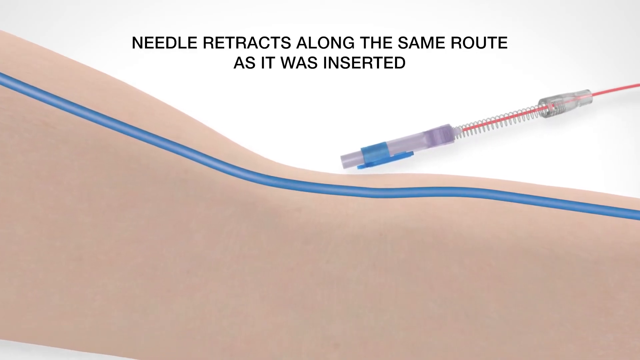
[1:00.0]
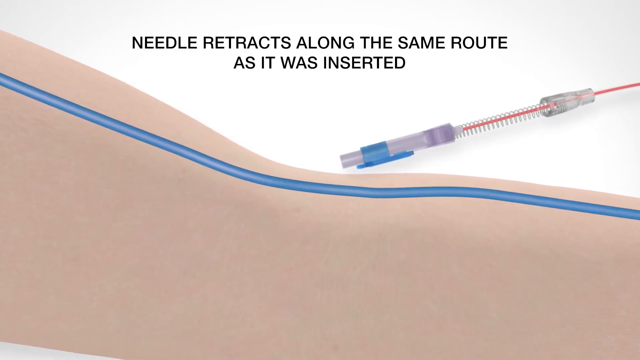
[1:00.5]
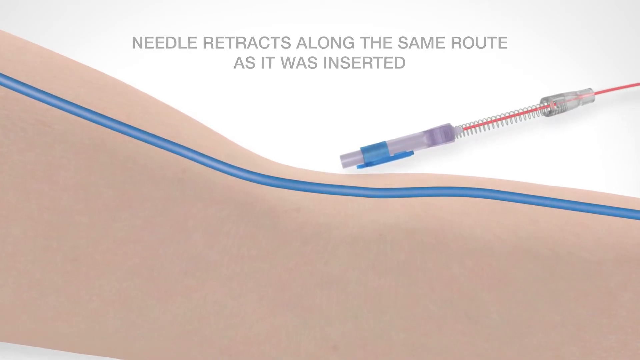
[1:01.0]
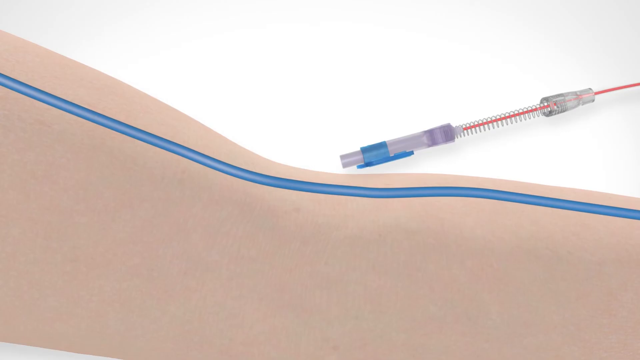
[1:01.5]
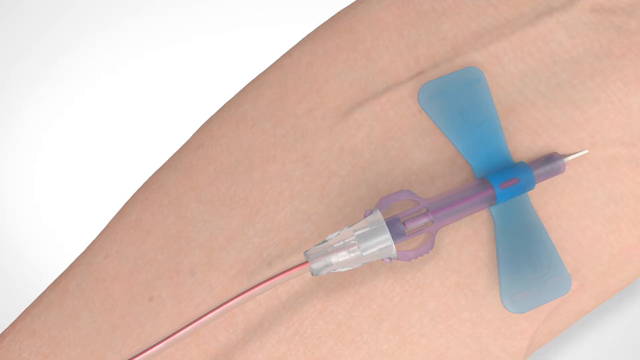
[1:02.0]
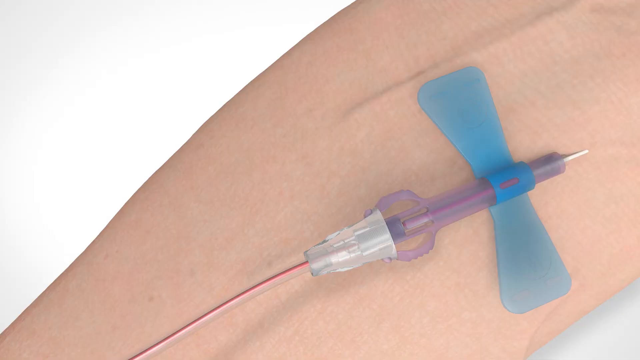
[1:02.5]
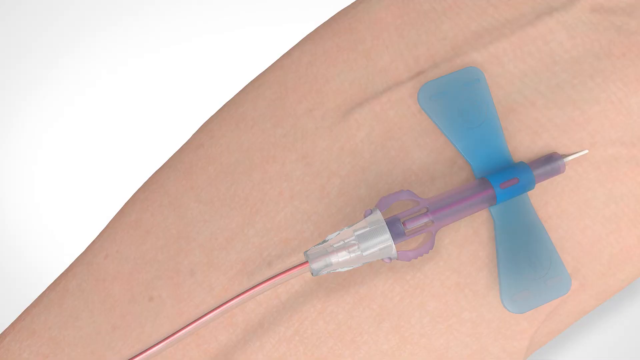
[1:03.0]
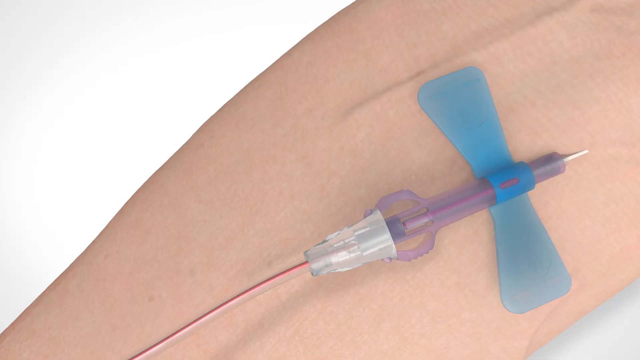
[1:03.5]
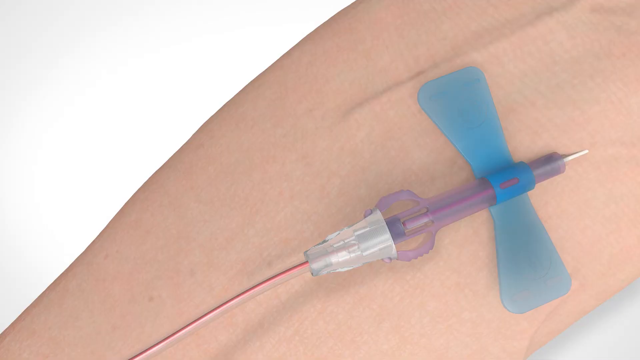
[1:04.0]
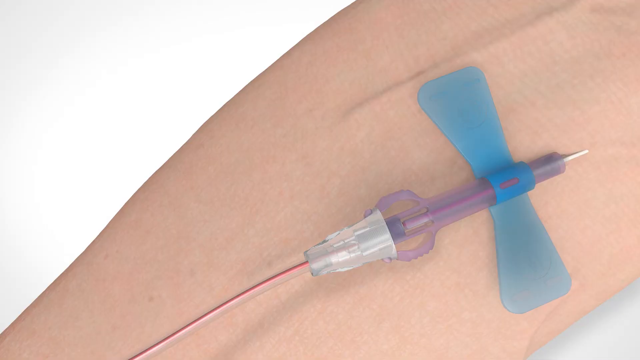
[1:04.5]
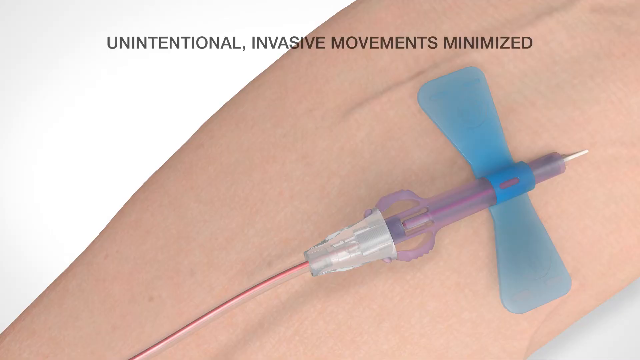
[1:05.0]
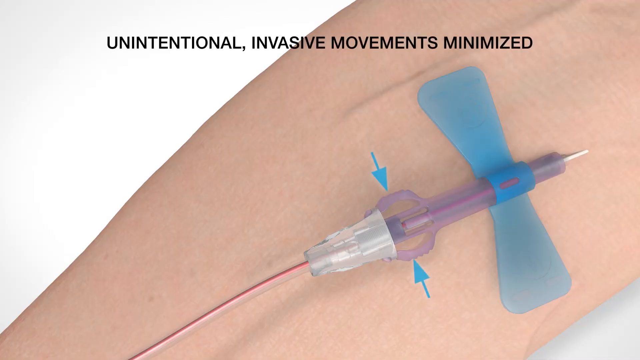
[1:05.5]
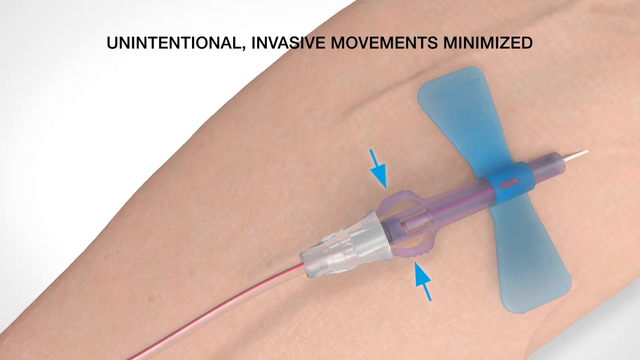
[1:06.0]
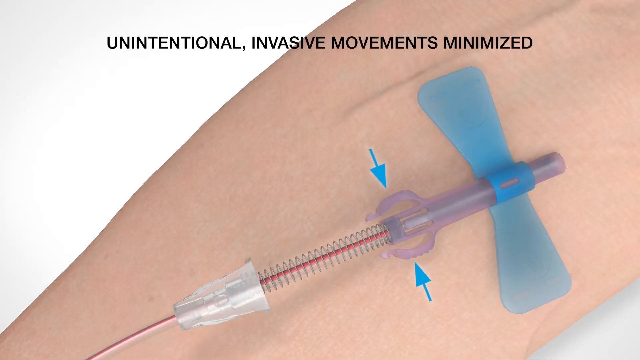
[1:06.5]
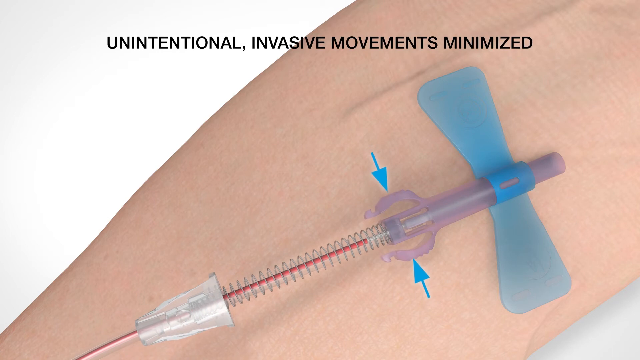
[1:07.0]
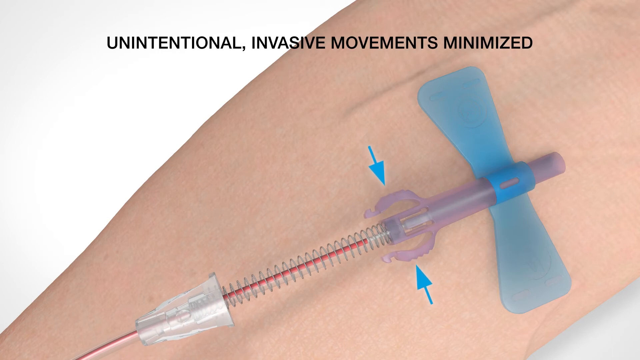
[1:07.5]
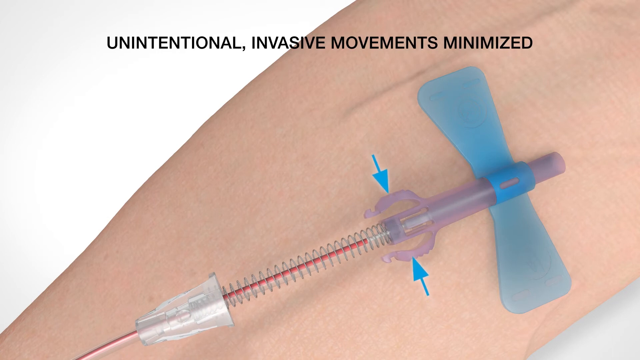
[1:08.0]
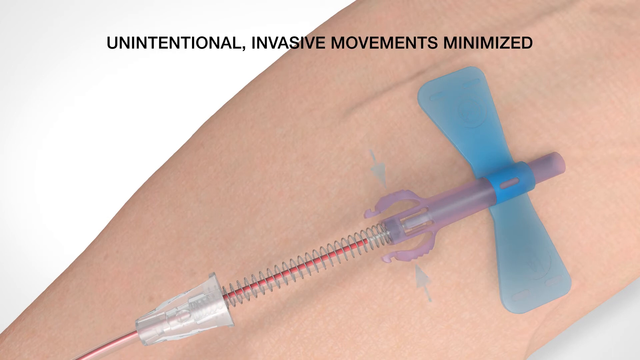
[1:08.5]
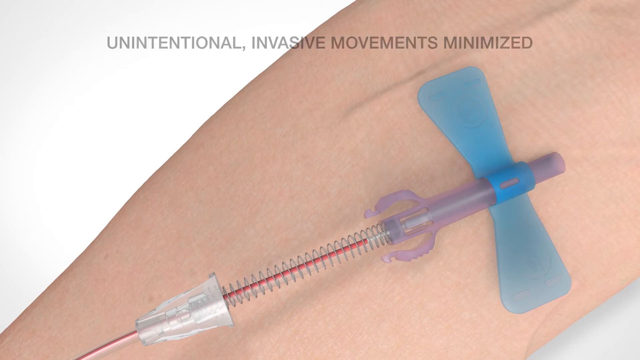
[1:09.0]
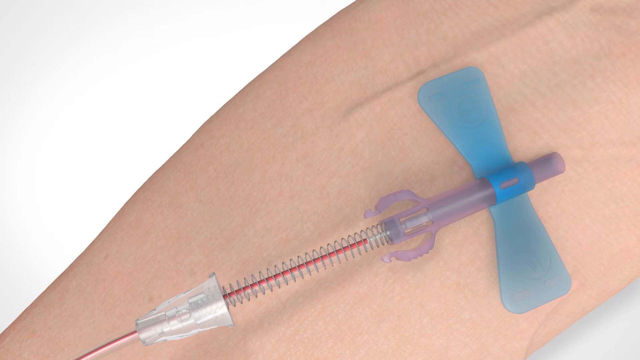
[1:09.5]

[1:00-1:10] The needle continues injecting the human arm. The perspective changes to show the top of the person's elbow, with the arm going from the top right of the screen down to the bottom left and a close-up on the elbow. The syringe is on top of the patient's arm with its two wings spread out from left to right. A graphic of two blue arrows points to the top and bottom of the base of the syringe, with the caption "unintentional invasive movements minimized." Someone is drawing back the syringe, and it appears as if blood is being drawn from the arm into the syringe and into the tubing below it.